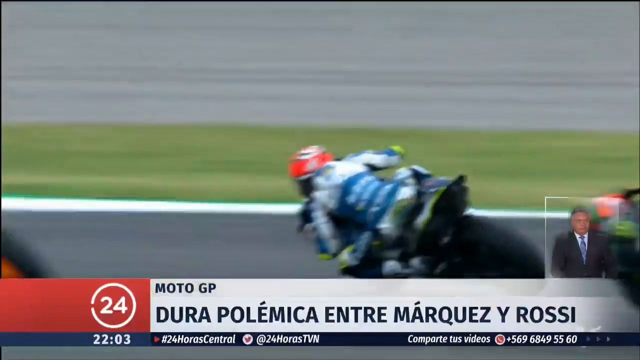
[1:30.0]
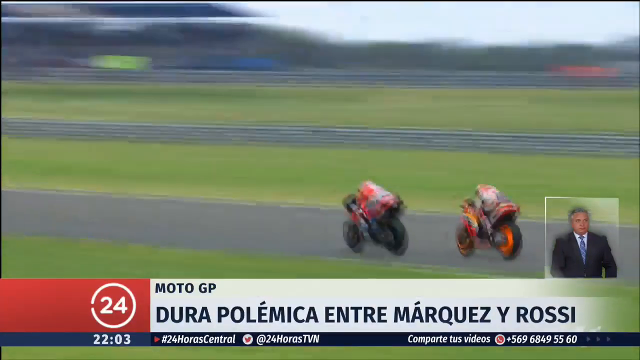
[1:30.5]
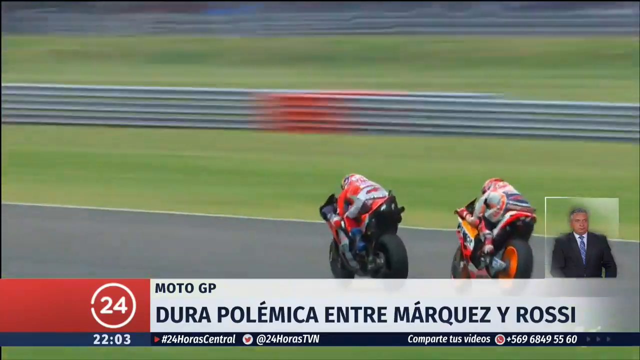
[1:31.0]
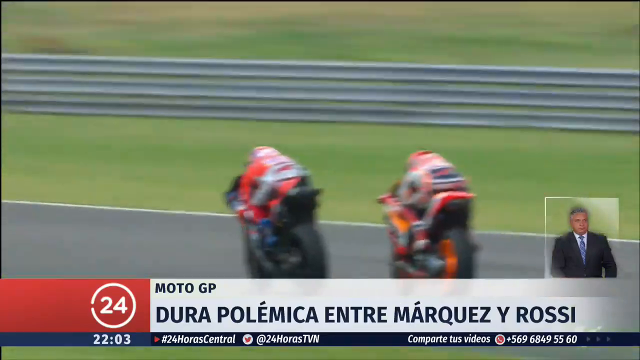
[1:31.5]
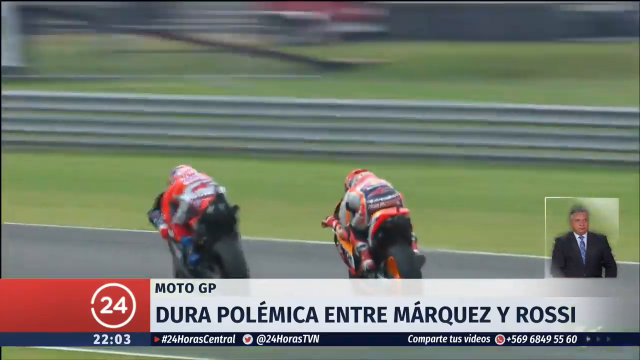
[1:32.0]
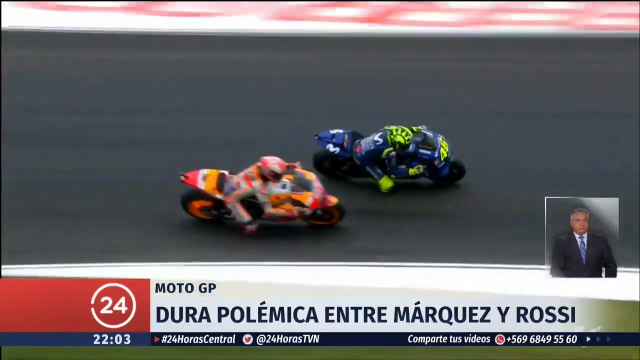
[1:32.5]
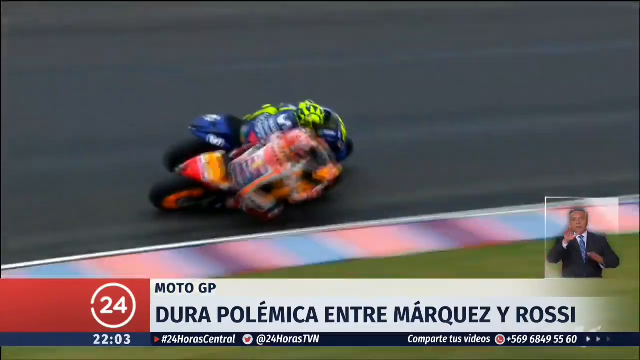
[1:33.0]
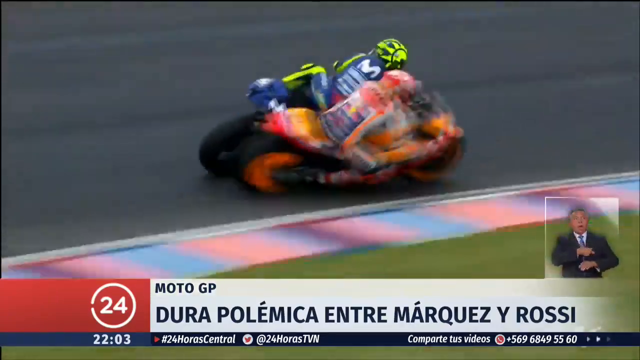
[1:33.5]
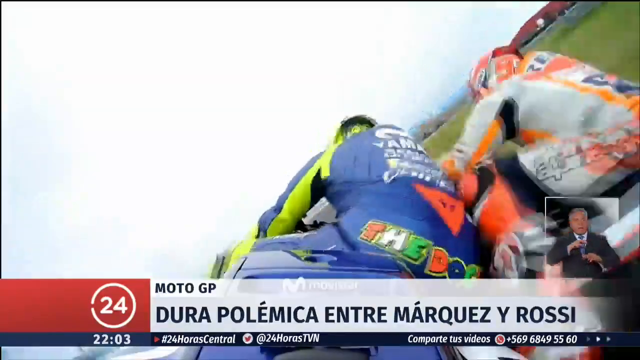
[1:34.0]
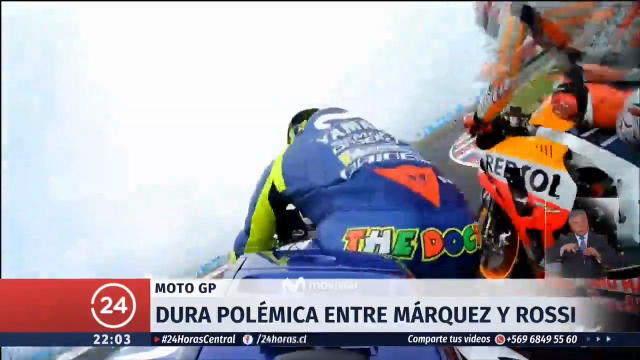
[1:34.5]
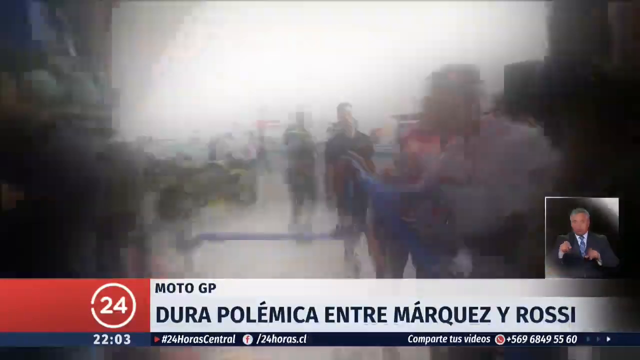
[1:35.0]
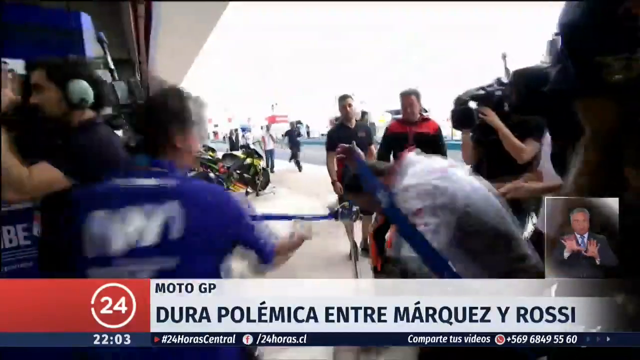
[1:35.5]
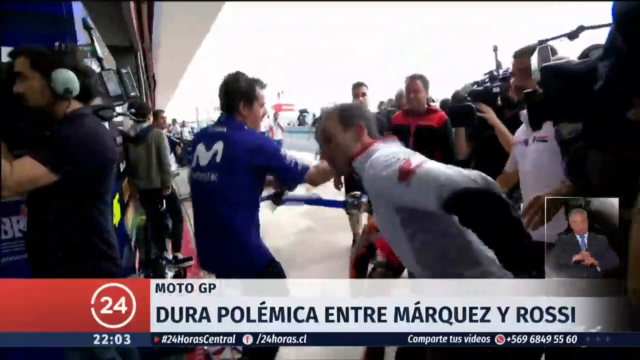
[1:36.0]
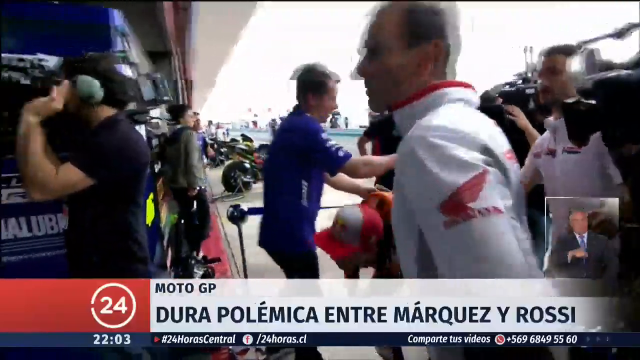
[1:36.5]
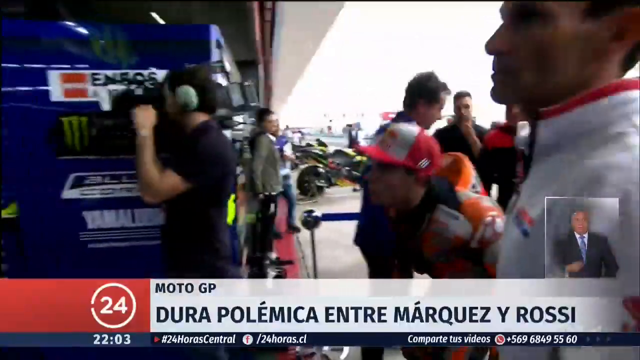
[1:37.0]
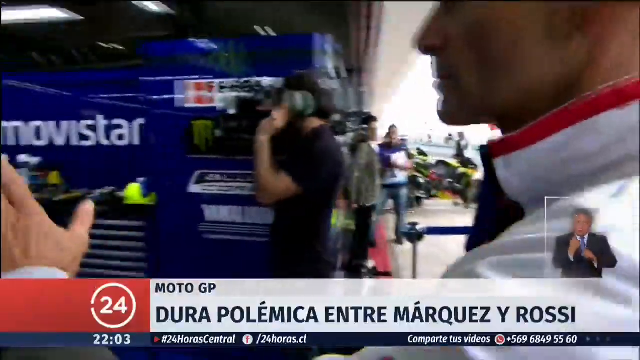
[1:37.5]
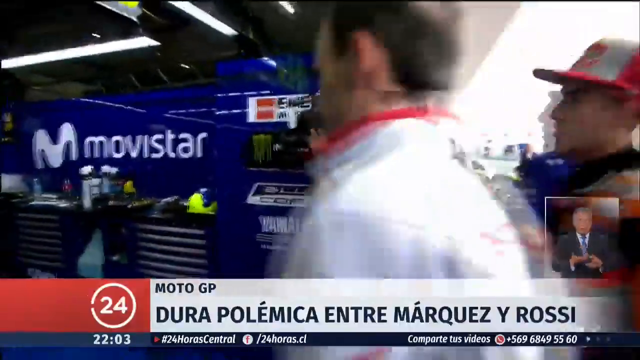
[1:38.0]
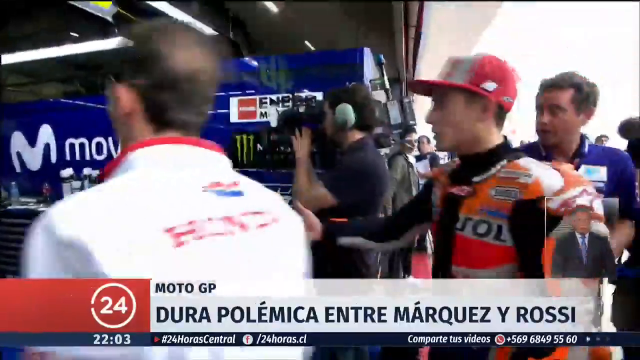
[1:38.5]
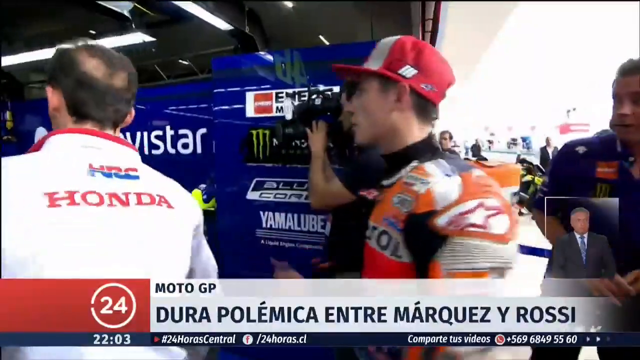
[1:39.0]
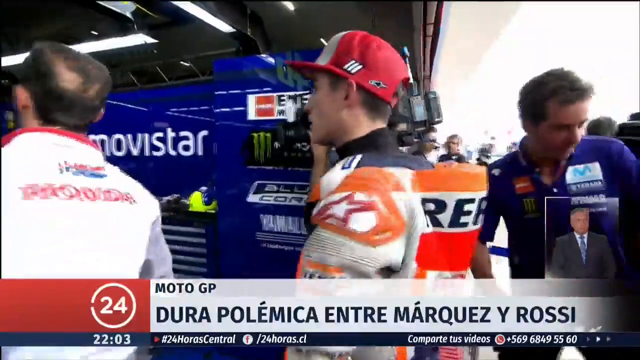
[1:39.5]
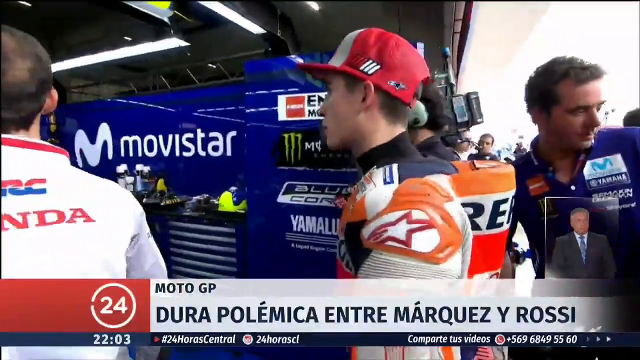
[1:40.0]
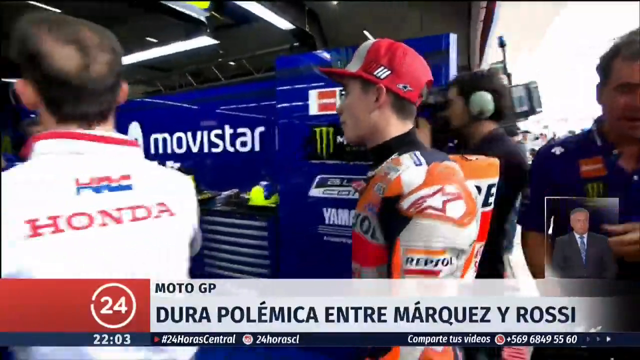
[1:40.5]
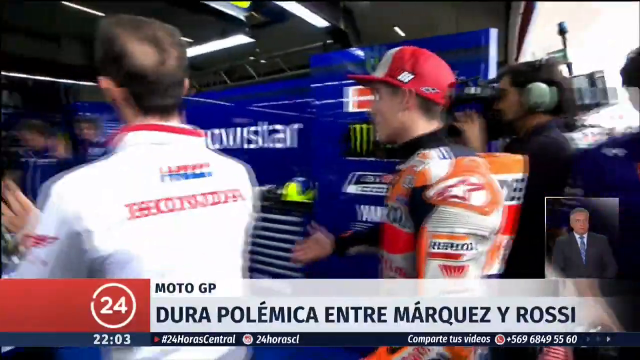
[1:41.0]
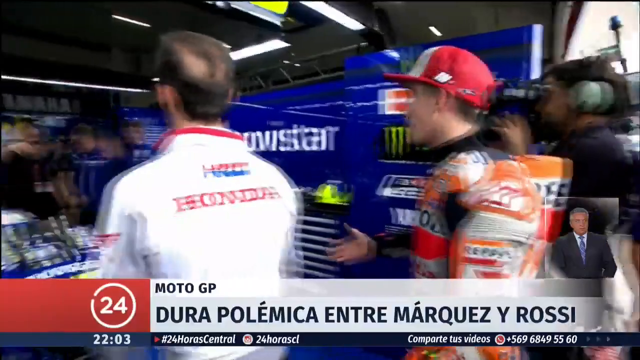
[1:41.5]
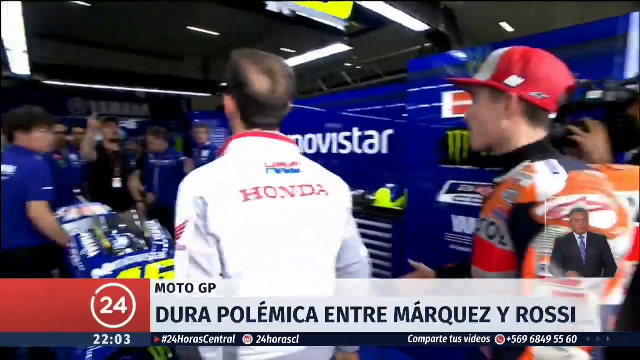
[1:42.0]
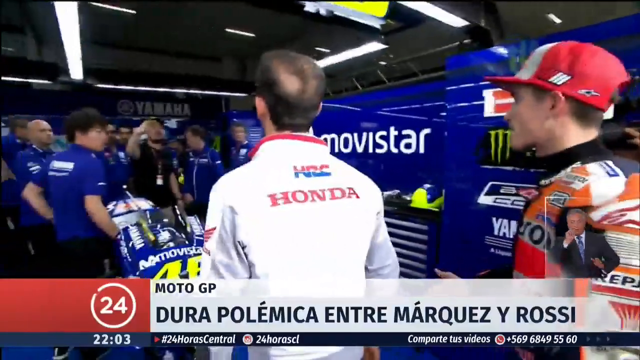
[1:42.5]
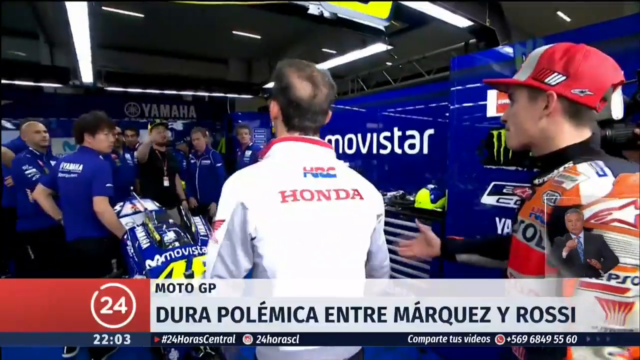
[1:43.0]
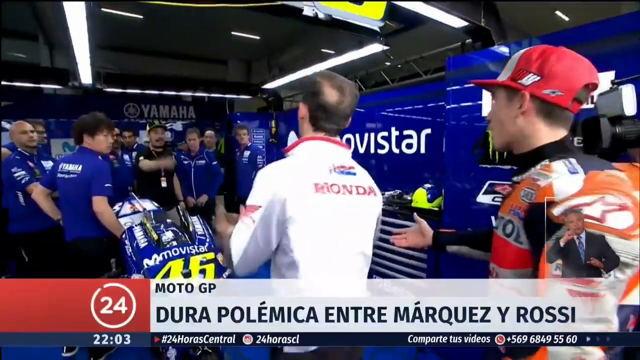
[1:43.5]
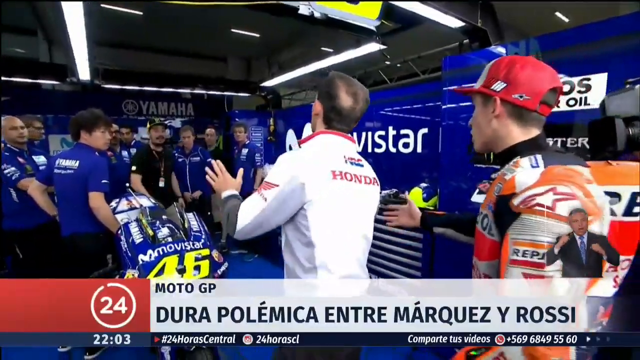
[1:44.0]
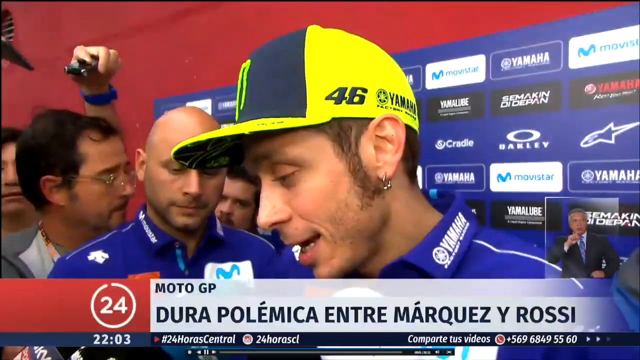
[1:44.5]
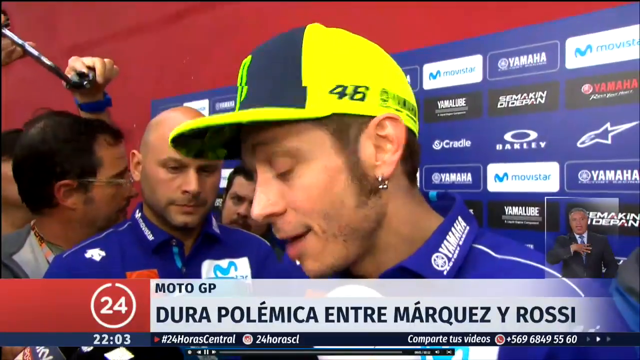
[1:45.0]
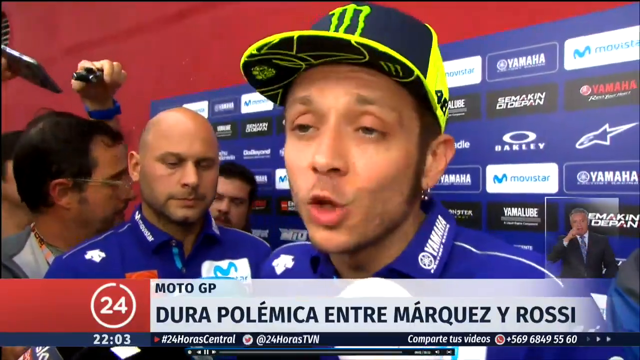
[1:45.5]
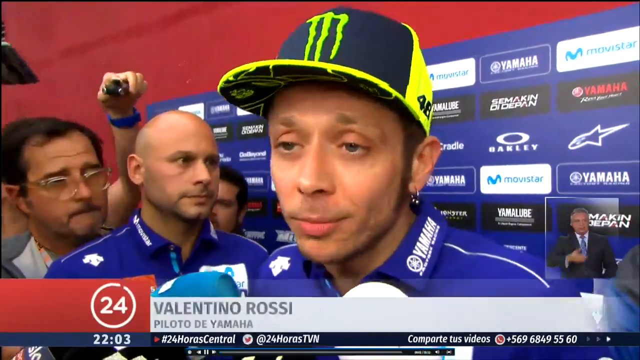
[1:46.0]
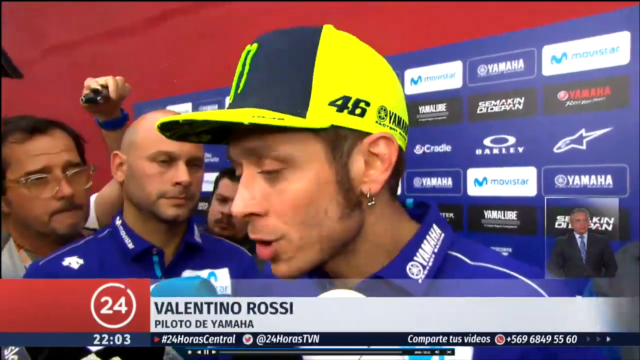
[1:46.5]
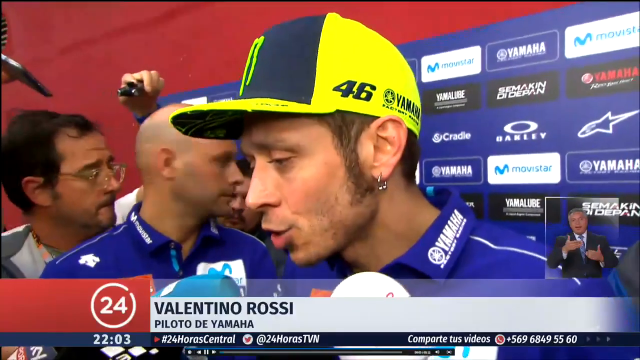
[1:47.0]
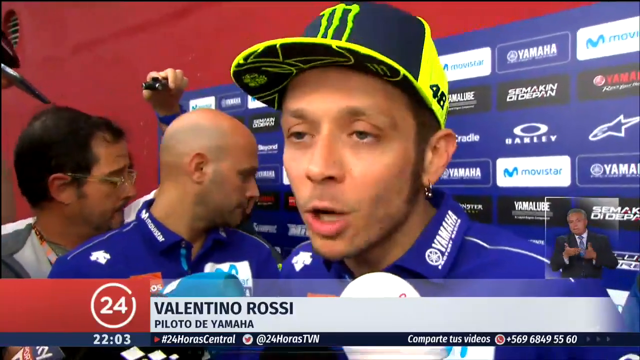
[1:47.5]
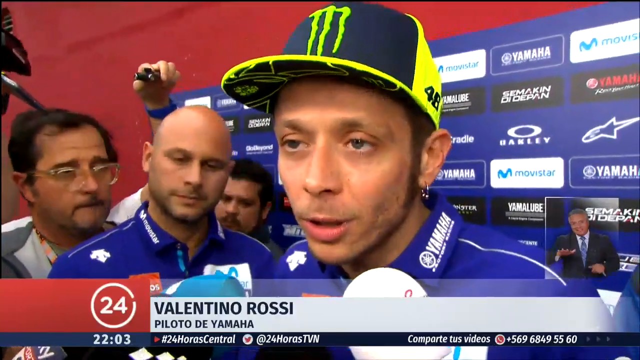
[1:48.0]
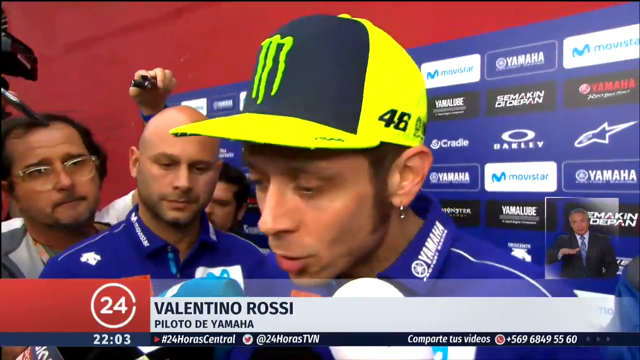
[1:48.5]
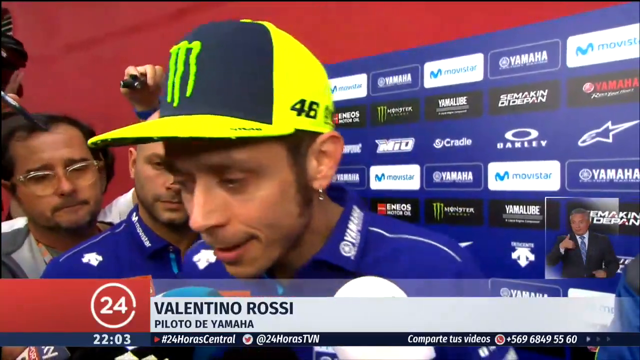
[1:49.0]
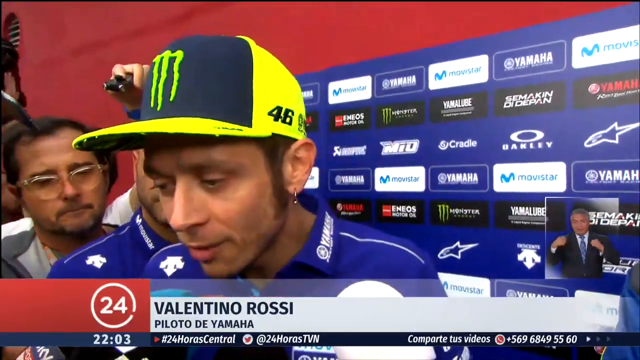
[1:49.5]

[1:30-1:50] The news logo is the number 24 in red with the 24 in white. A motorcycle with blue on it appears, and somebody wears a red and white helmet. The interpreter is in the box on the right side. Two motorcyclists go around, getting close together, and one almost flies off the bike. A celebration follows in the garage area or somewhere, with racers and various sponsors, including Honda and what looks like Yamaha, with a lot of Yamaha items. One man is introduced wearing a Monster Energy drink hat; it says number 46, and he has a beard and a light mustache. The little banner at the bottom says "moto GP", and everything else is in Spanish. There is a lot of blue in the garage area, with many people in blue and a blue sponsor background with white writing and a few reds. A little of the green grass on the racetrack is visible as the bikes go by.